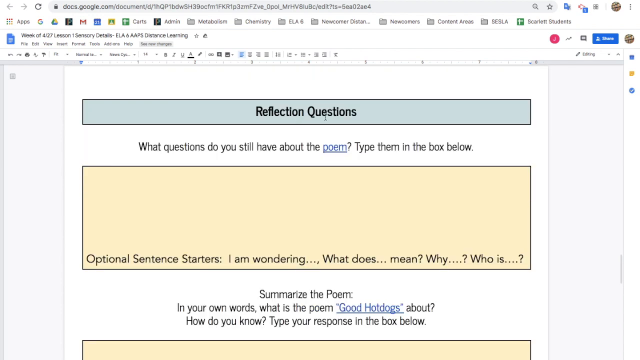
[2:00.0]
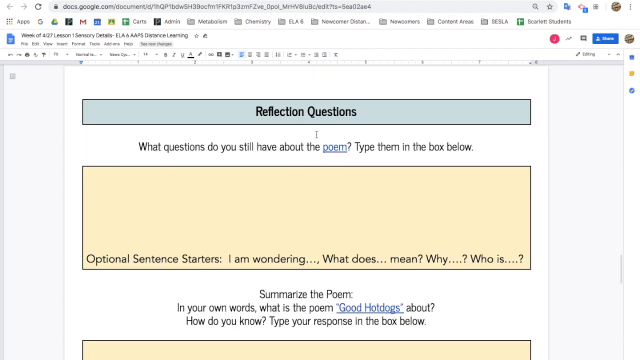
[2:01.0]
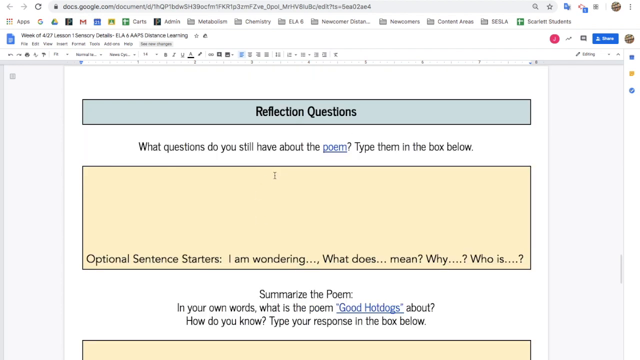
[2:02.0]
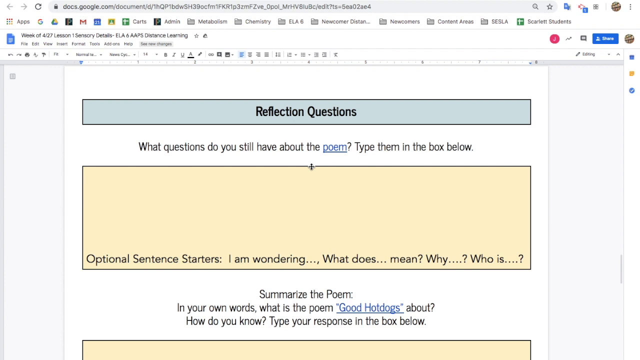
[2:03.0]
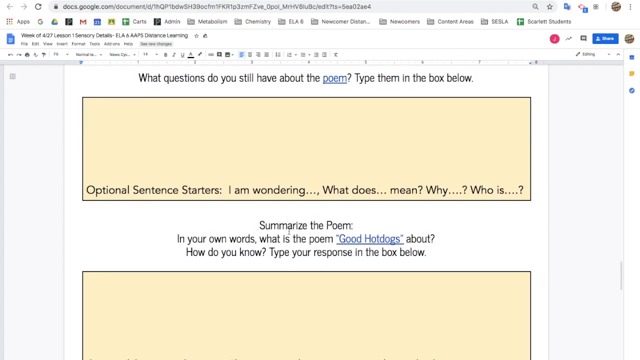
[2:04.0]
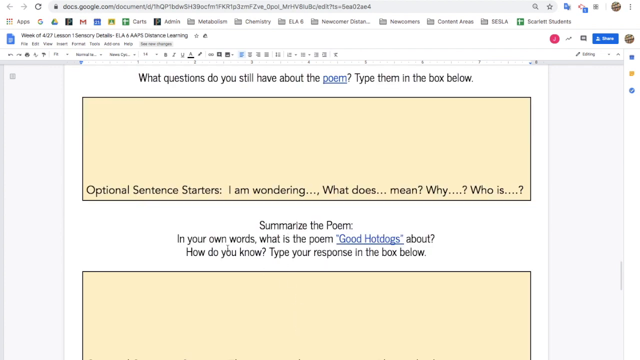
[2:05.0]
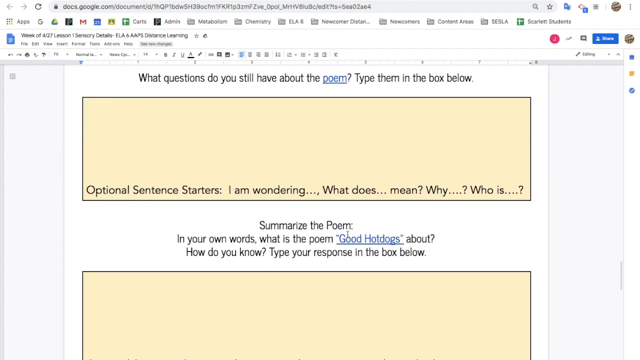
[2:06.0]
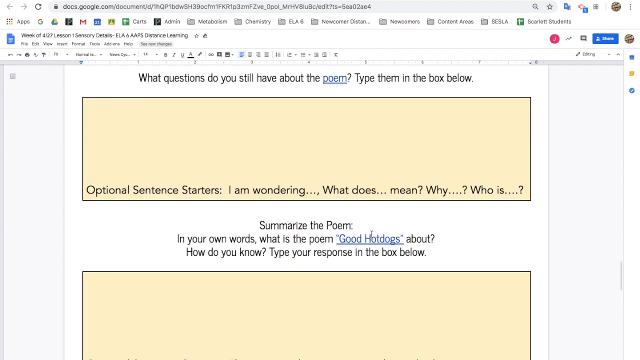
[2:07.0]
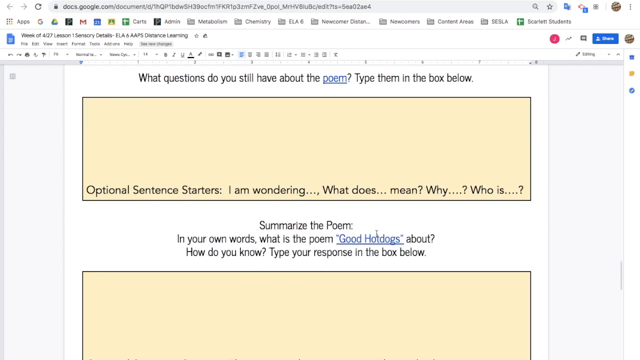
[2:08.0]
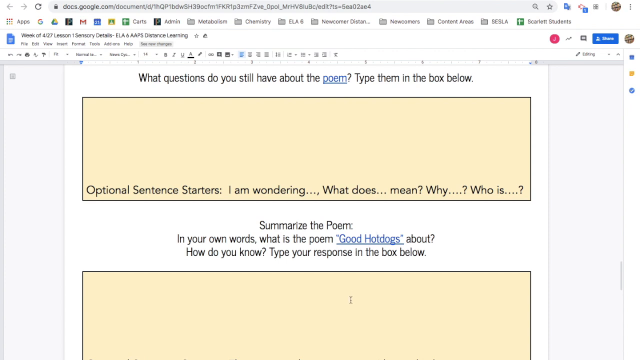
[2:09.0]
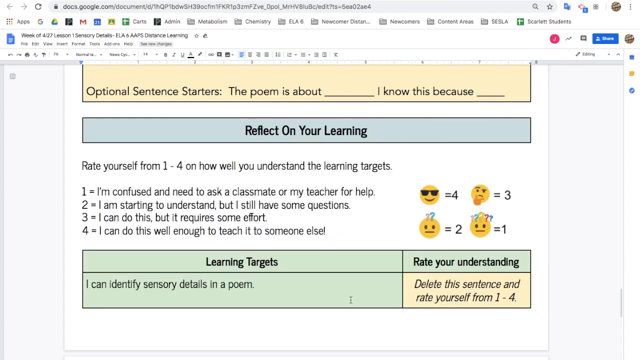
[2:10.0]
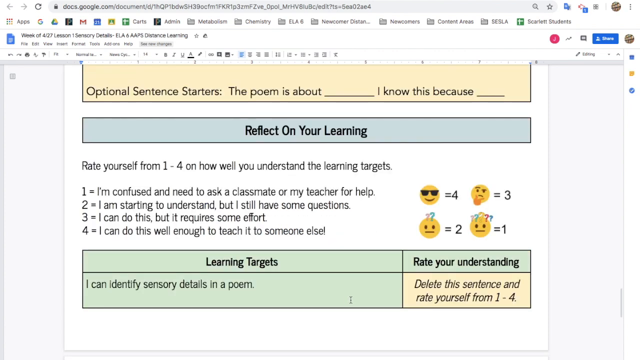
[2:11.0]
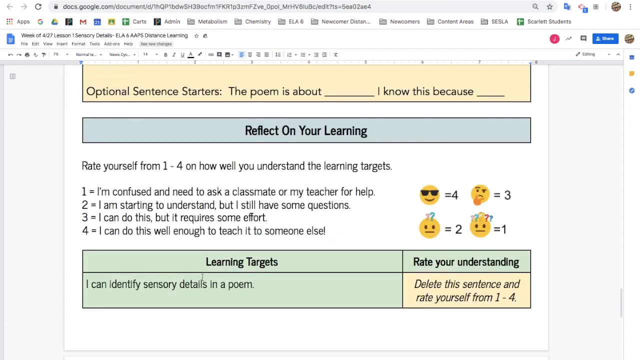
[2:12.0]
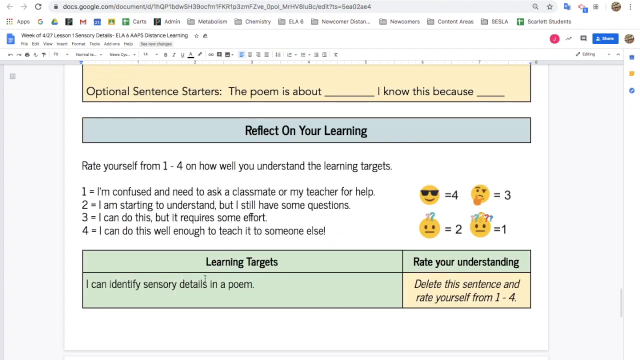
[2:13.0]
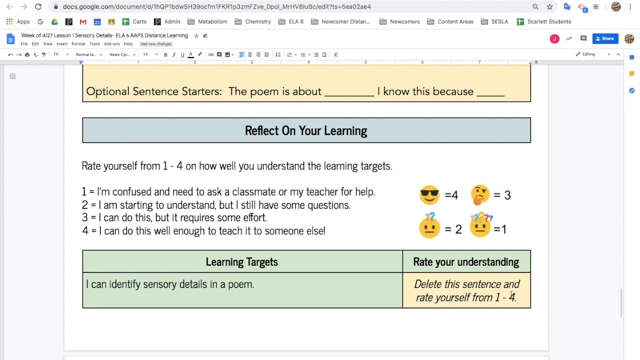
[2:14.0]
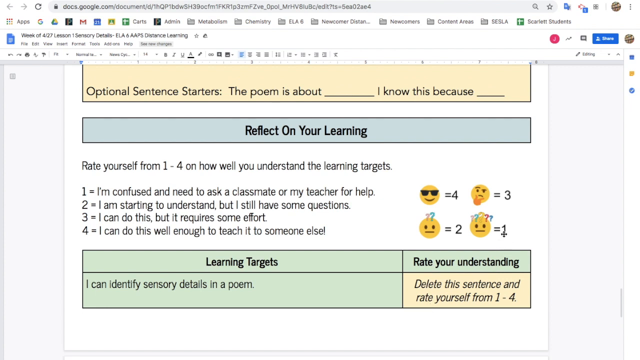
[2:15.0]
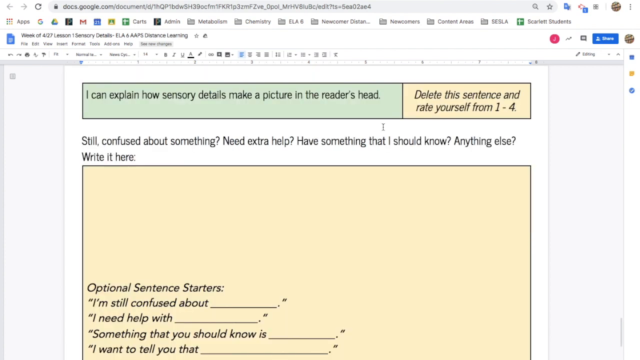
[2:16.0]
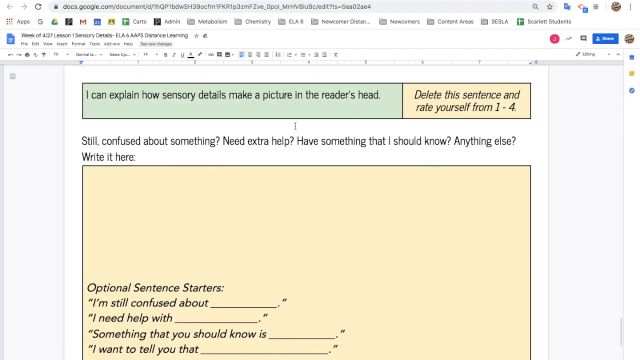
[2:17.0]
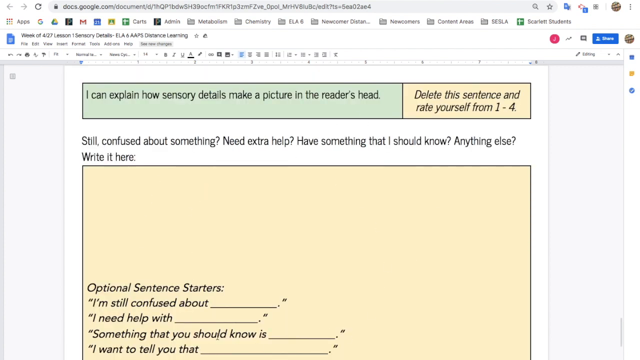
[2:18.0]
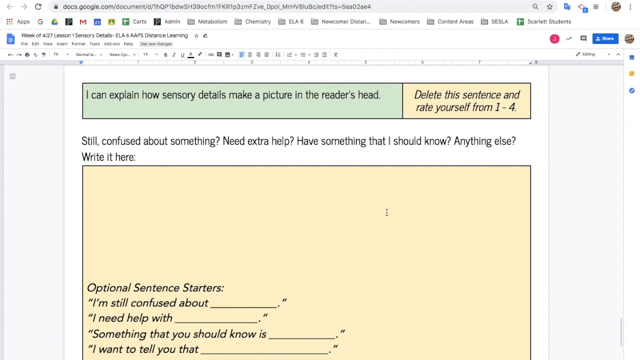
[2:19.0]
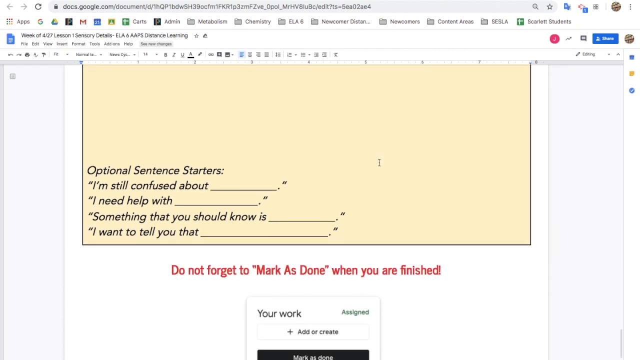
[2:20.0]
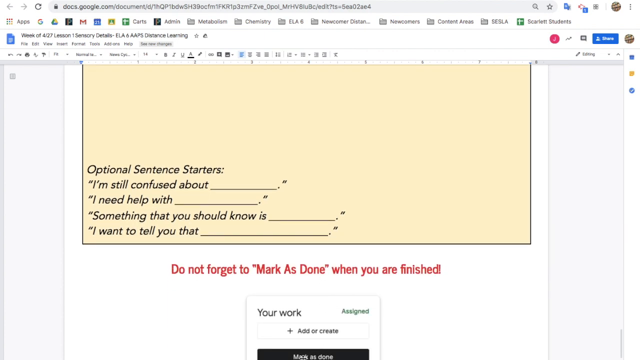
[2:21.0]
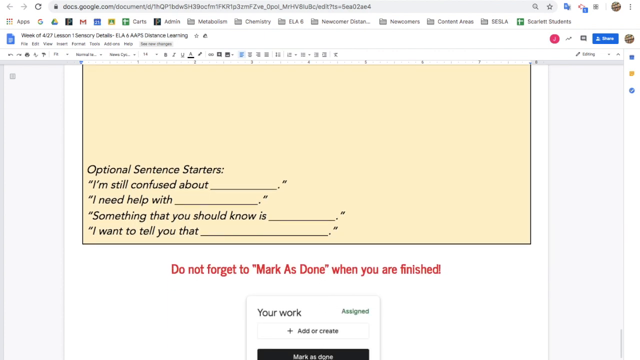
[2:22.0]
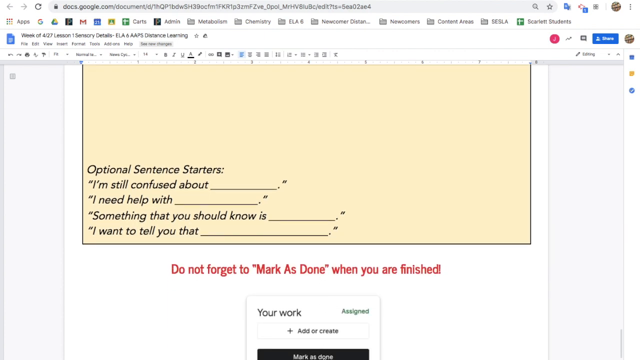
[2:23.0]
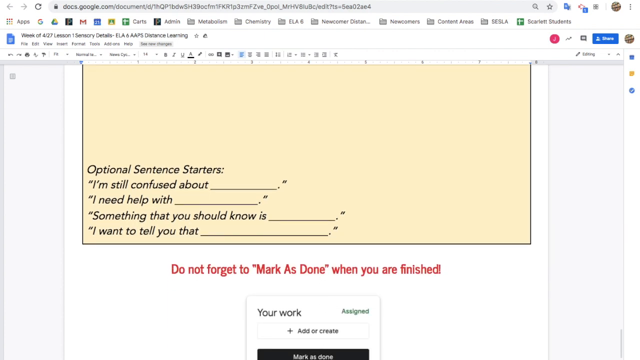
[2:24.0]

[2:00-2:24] The Google Docs page shows information about reflection questions, including sections for senses such as see, hear, taste, touch, and smell, with input fields, and a last part of the page with reflection question sections and input fields. The person controlling the page scrolls down to the "reflect on your learning" section, which has a sort of light blue background. Below it, the page continues with a white background and text that says "rate yourself from 1 to 4," with 1 meaning "you're confused," 2 meaning "you're starting to understand but still have some questions," 3 meaning "you can do this but it requires some effort," and 4 meaning "you can do it well enough to teach someone else," related to reflecting on the learning experience with this poem.